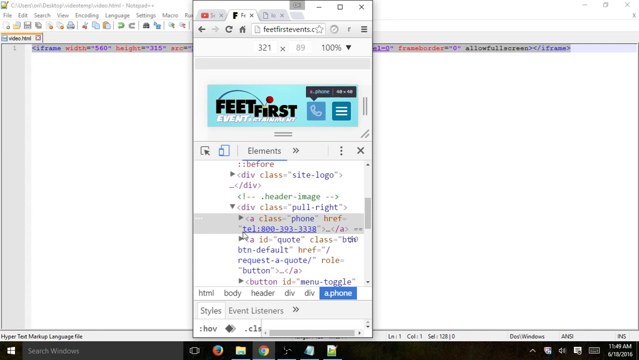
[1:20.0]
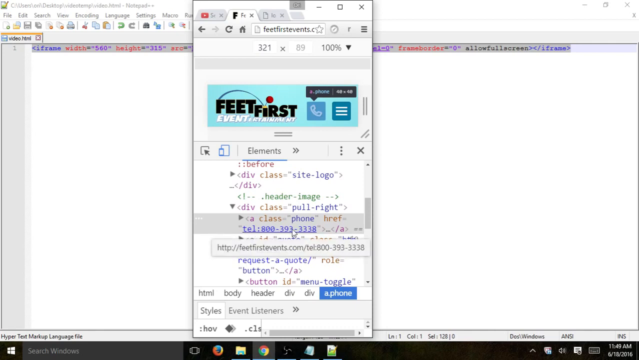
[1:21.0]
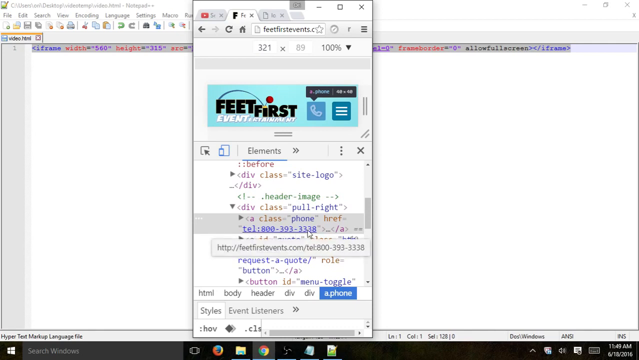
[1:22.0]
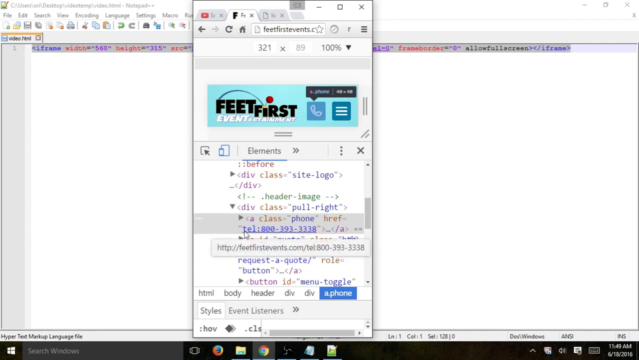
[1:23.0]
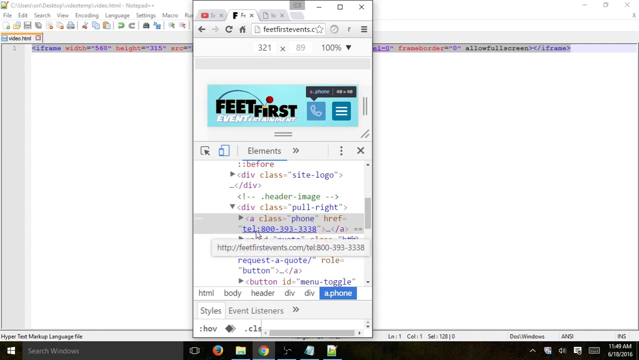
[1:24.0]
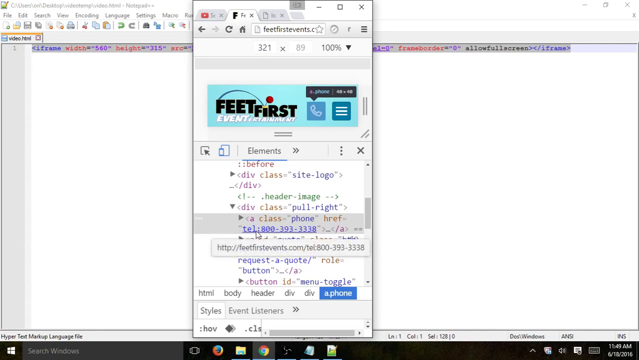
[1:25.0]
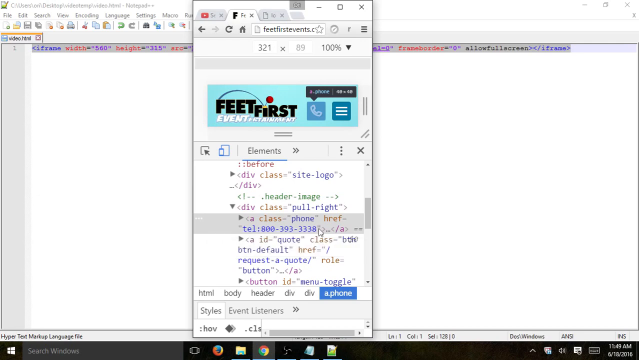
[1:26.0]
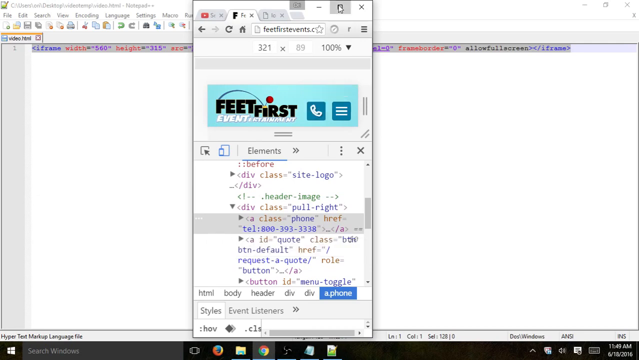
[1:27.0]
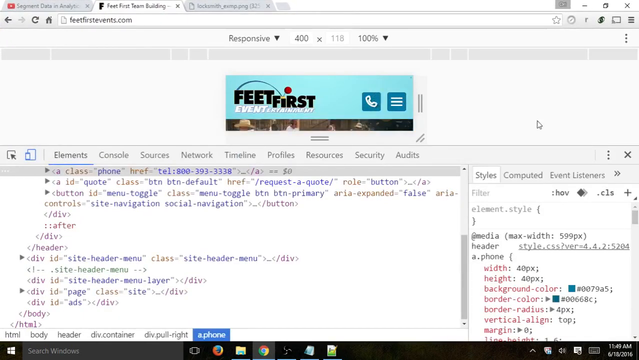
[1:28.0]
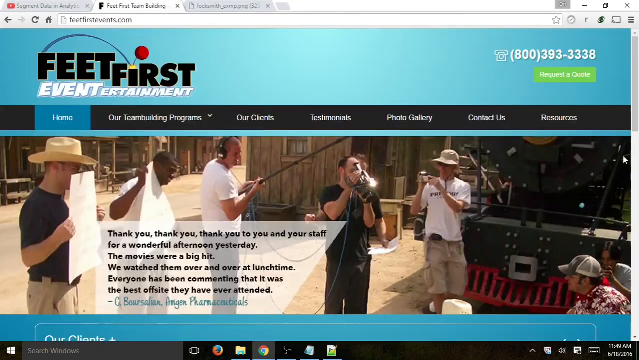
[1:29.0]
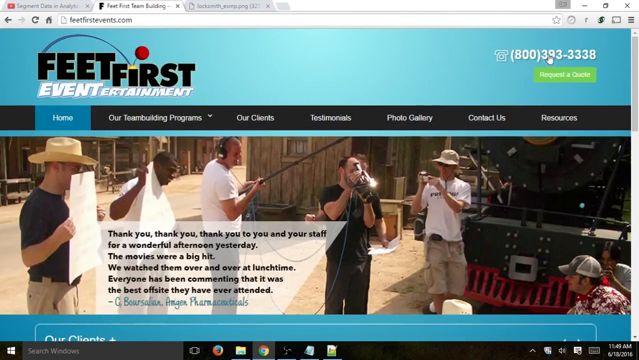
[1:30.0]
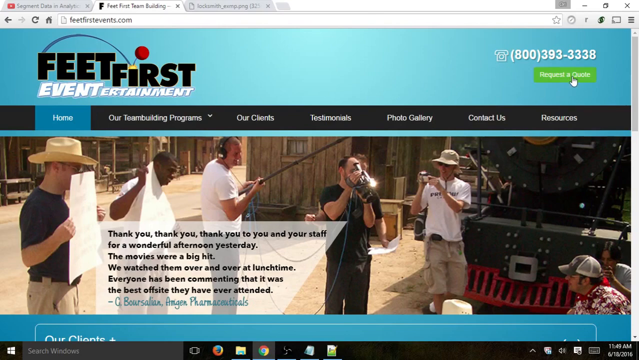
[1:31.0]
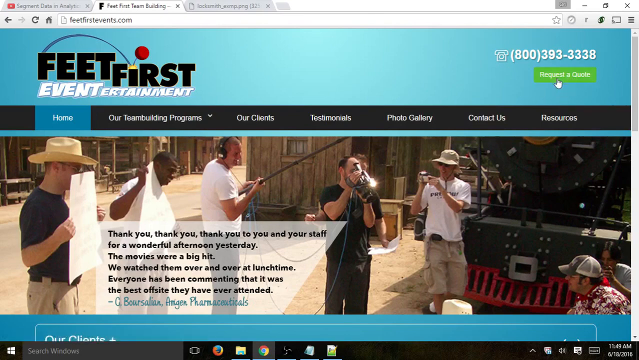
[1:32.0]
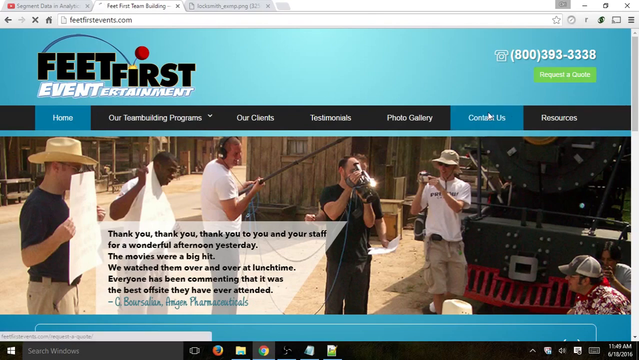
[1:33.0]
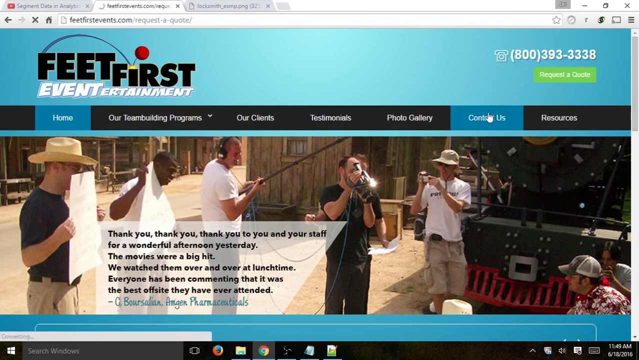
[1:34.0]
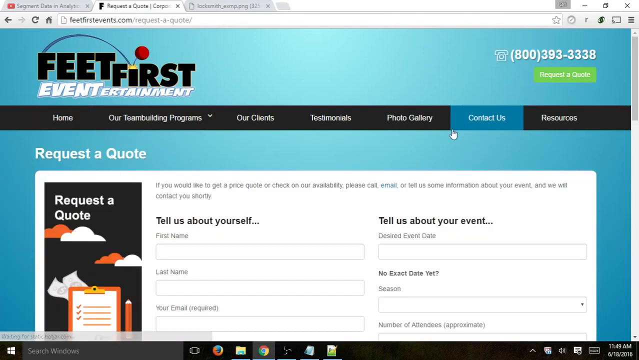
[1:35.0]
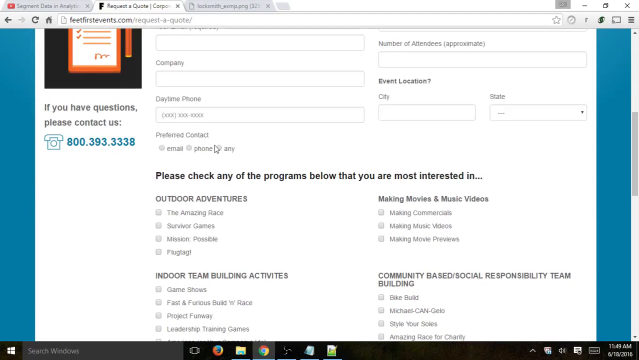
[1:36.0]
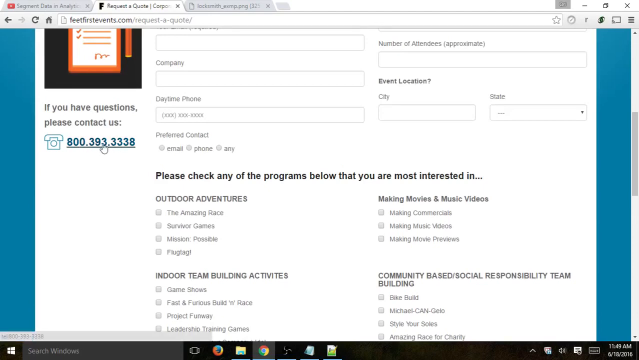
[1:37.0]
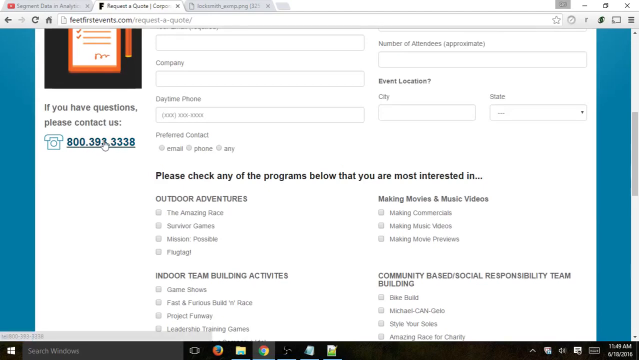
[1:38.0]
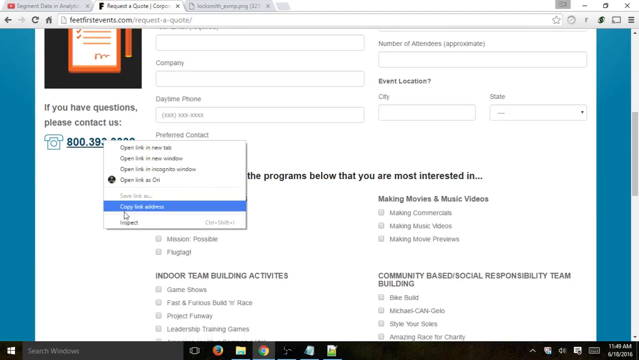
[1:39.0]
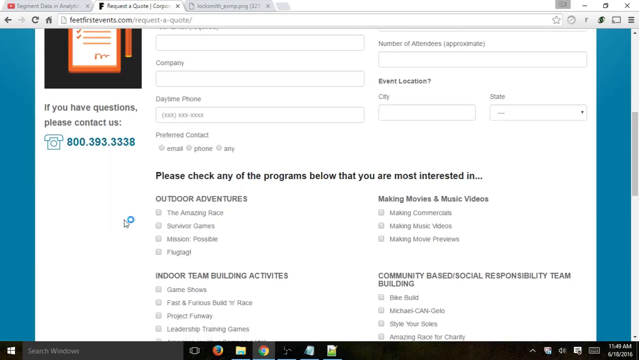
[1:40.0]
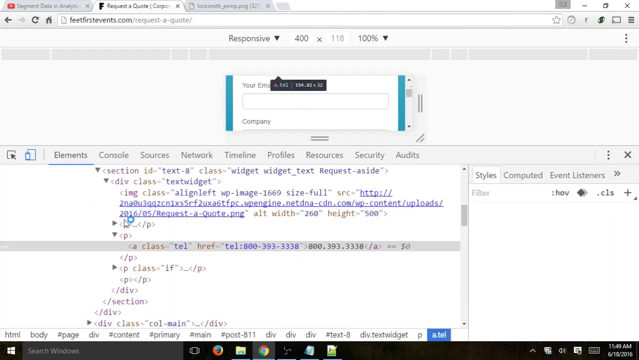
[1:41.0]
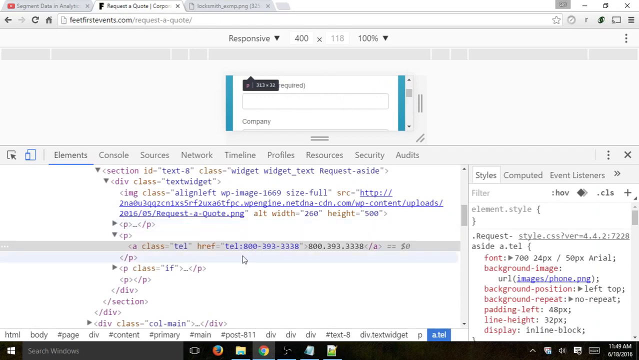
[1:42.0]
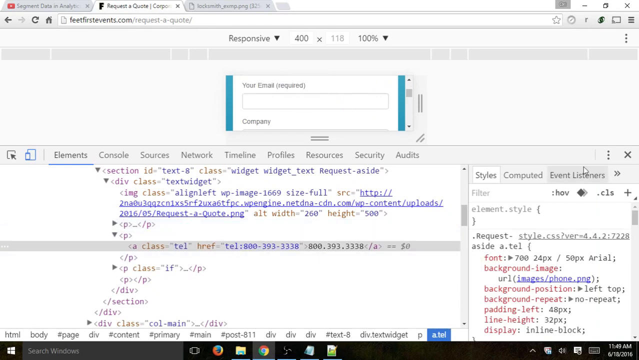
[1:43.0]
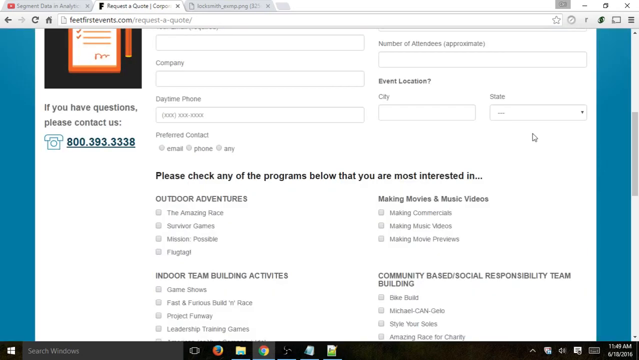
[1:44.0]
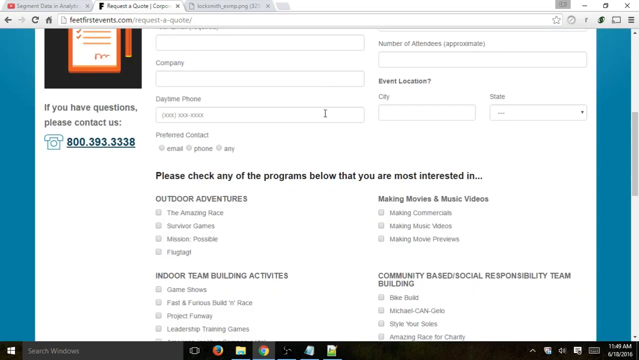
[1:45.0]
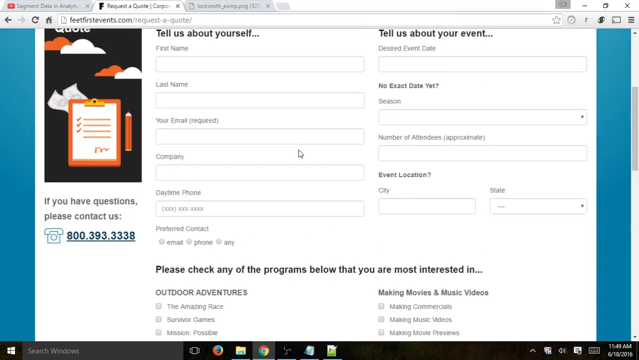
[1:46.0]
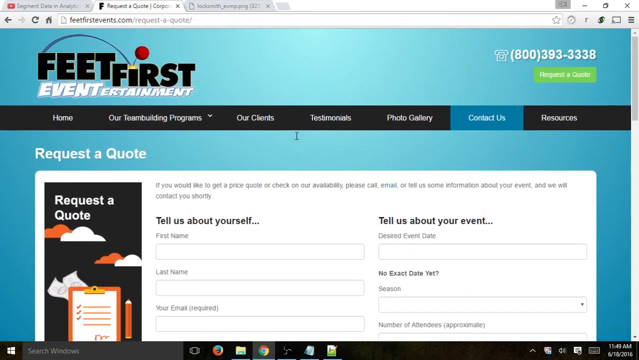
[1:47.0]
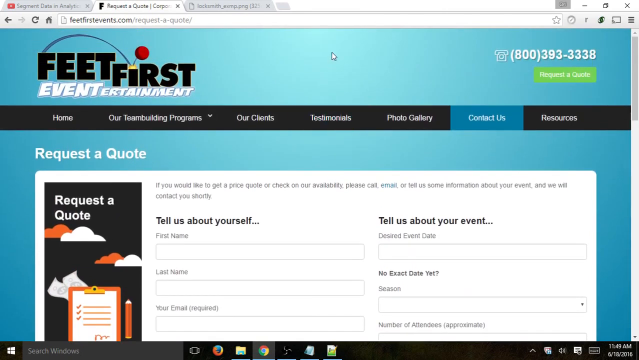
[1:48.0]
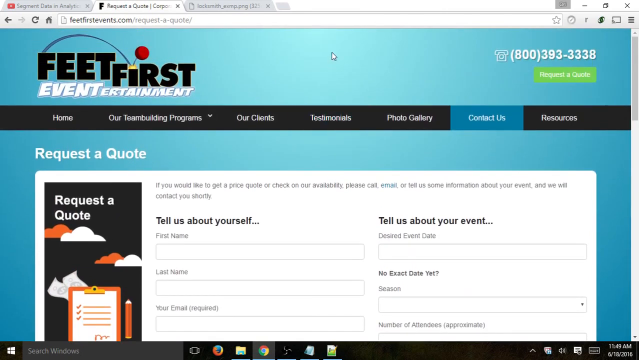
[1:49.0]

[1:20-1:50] The webpage brings up the HTML very quickly and the phone number is highlighted. It then goes back to the webpage, showing the Mexican band scene with someone wearing a cowboy hat and someone recording two trumpeters, along with another testimonial. The cursor, a hand with the index finger out, highlights request a quote, then moves to contact us and pushes the button. This brings up a request a quote form that says "tell us about yourself" with fields for first name, last name, email and company, and "tell us about your event". The background is a light teal, as it was originally. The page scrolls down and the phone number is highlighted again; a menu is pulled down and the HTML text appears again, and then it goes back to the page.